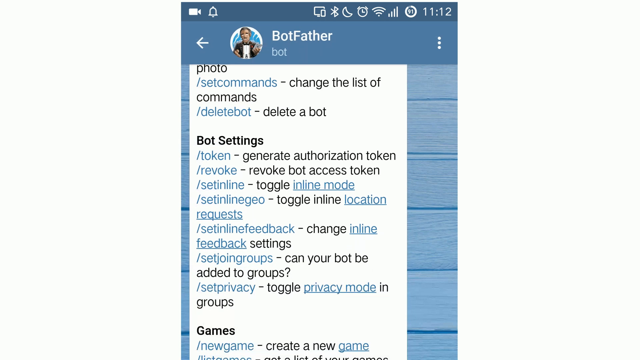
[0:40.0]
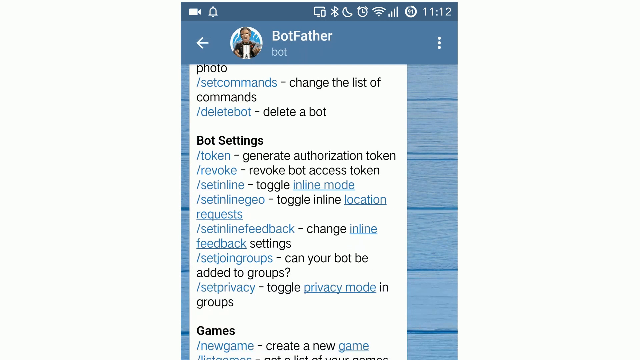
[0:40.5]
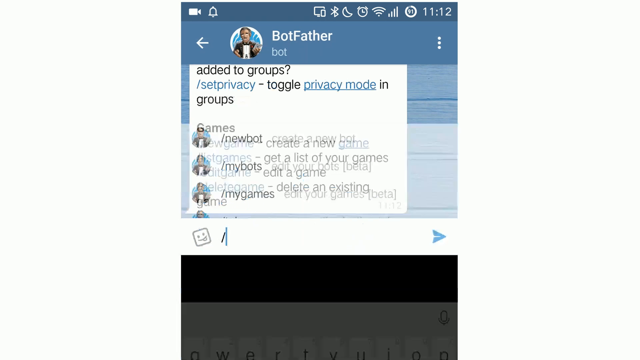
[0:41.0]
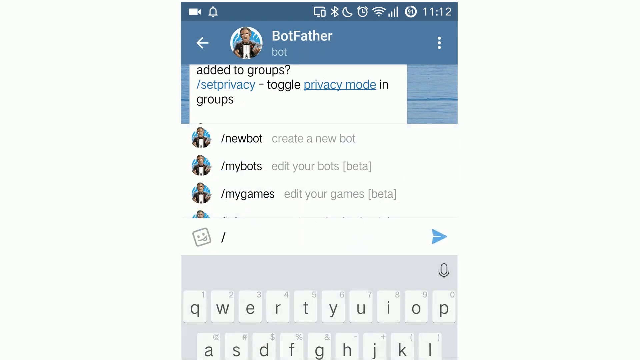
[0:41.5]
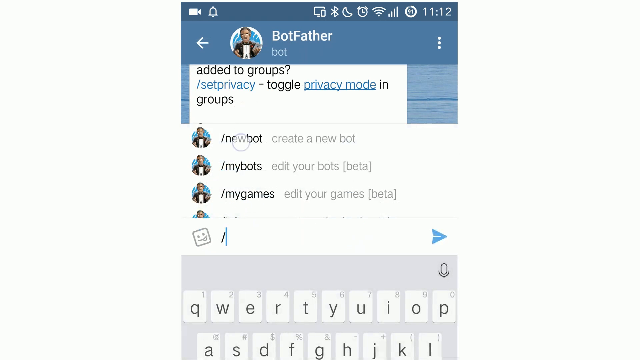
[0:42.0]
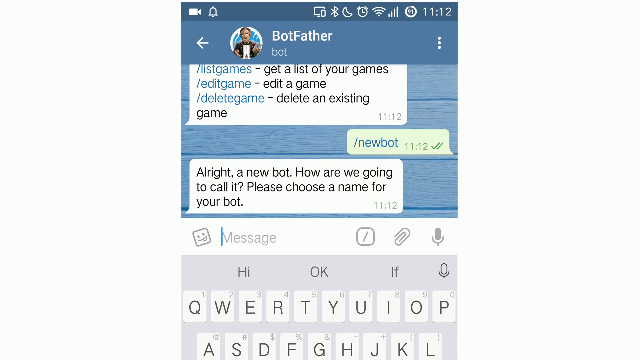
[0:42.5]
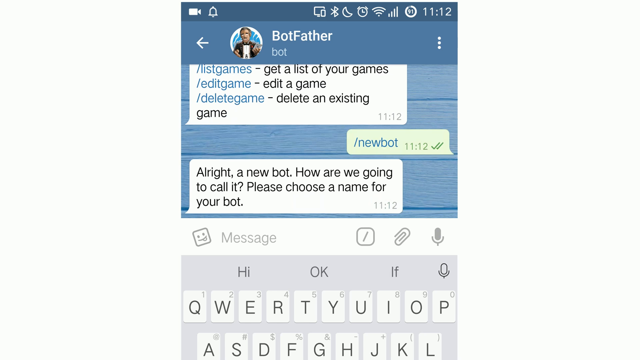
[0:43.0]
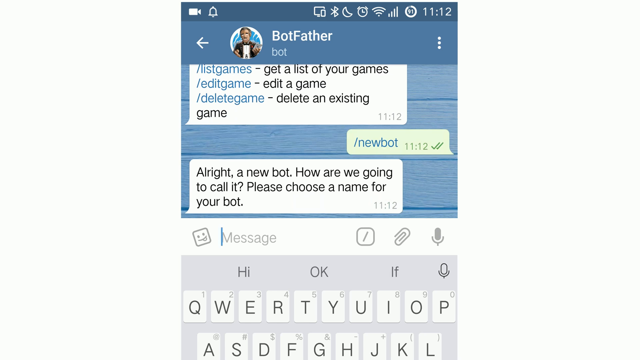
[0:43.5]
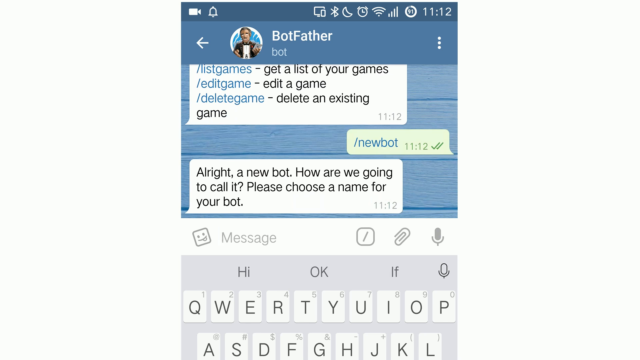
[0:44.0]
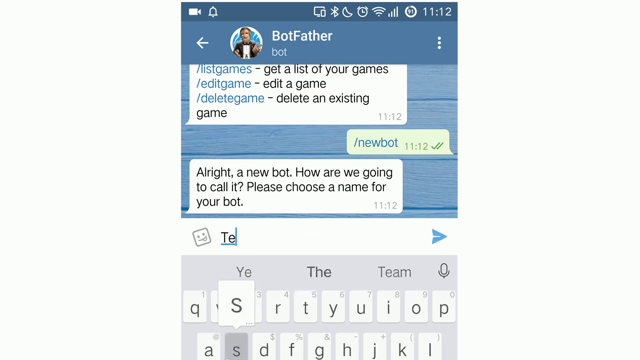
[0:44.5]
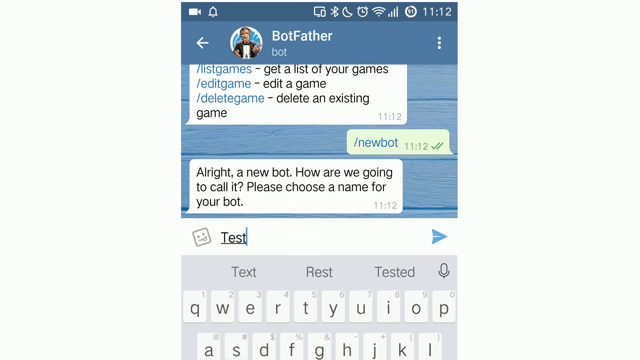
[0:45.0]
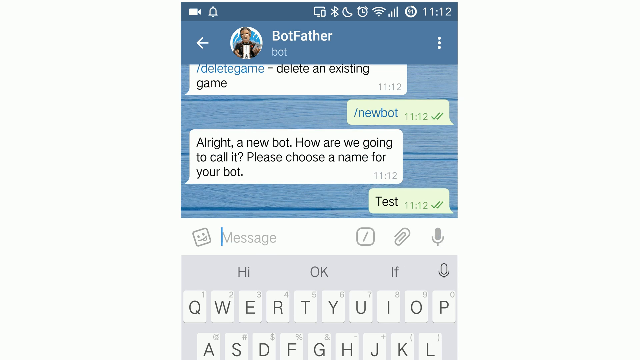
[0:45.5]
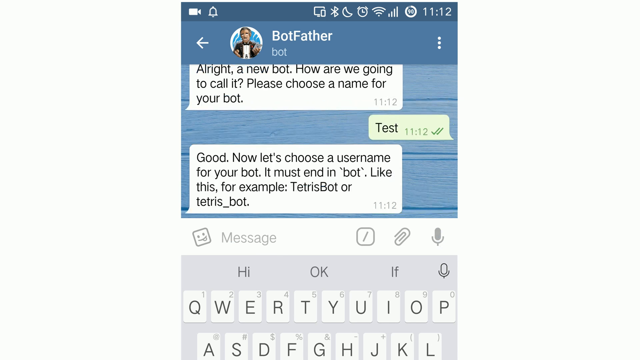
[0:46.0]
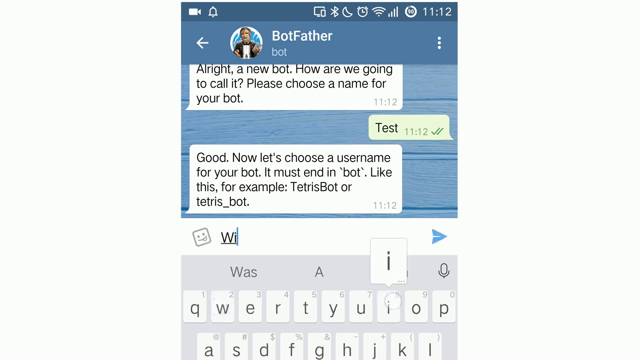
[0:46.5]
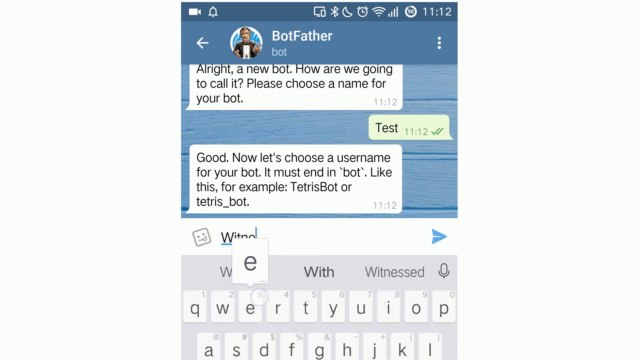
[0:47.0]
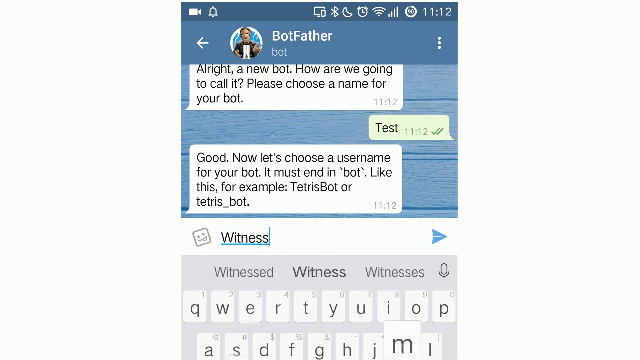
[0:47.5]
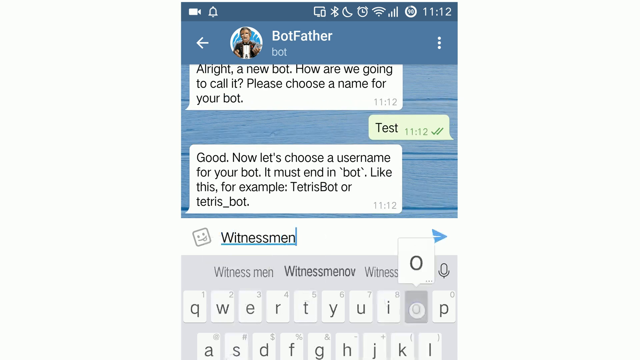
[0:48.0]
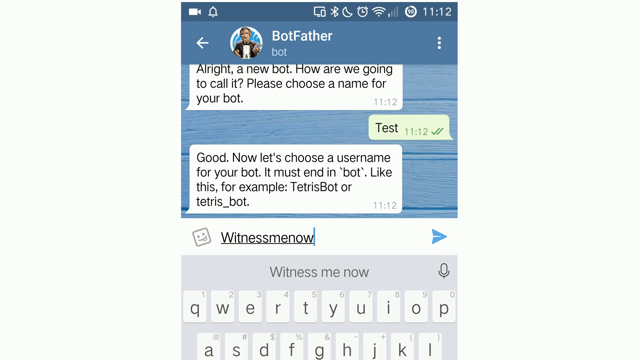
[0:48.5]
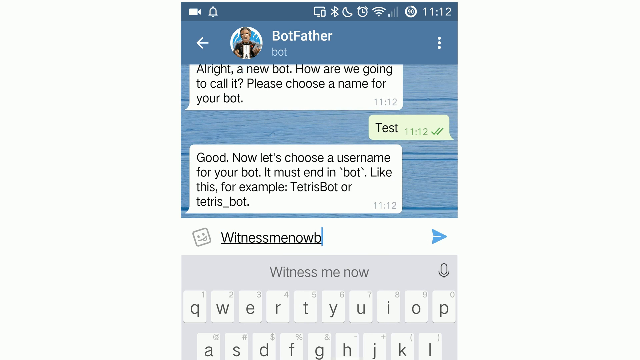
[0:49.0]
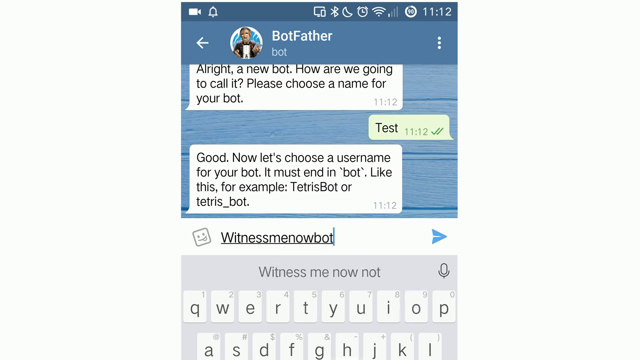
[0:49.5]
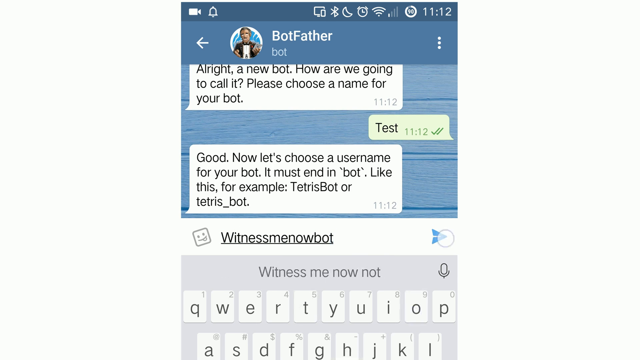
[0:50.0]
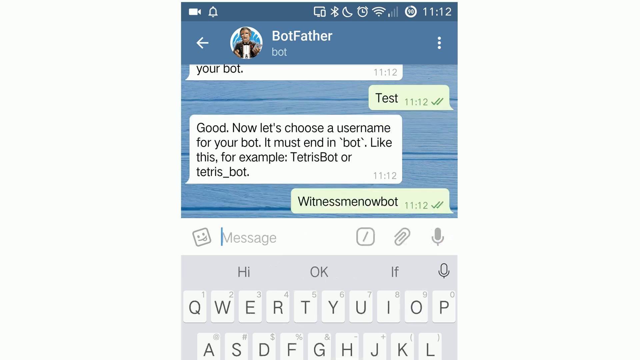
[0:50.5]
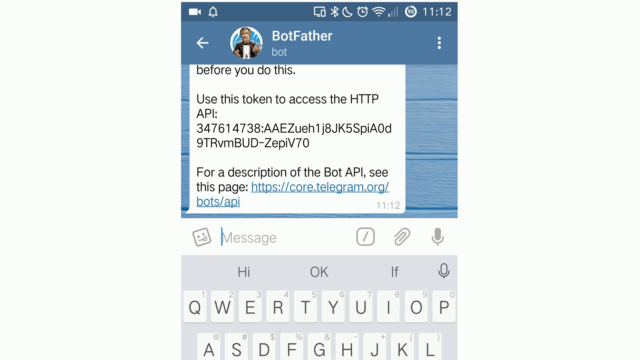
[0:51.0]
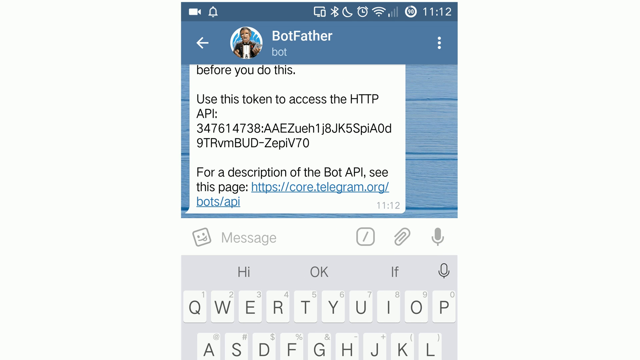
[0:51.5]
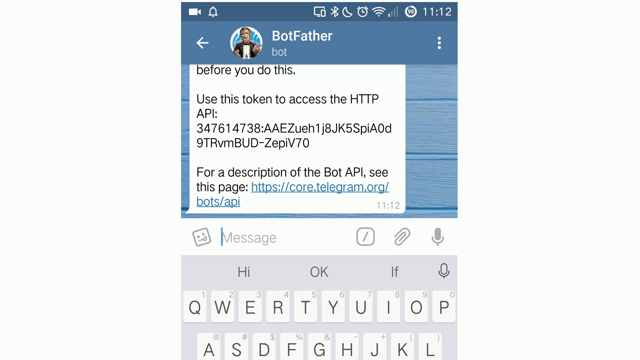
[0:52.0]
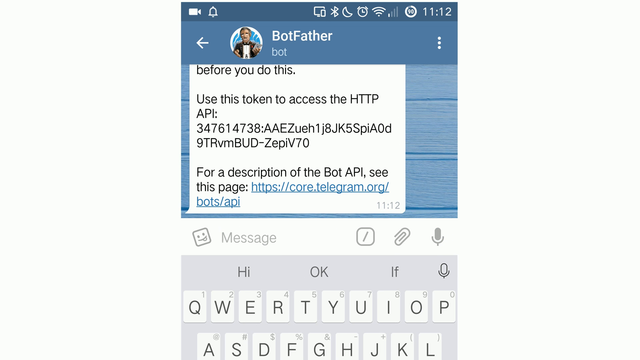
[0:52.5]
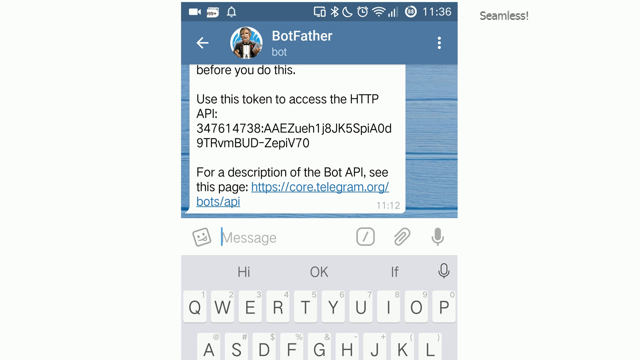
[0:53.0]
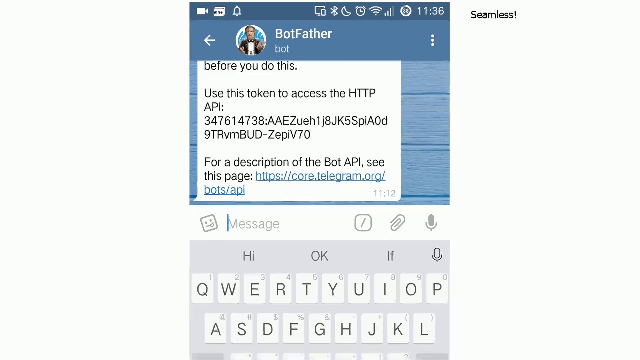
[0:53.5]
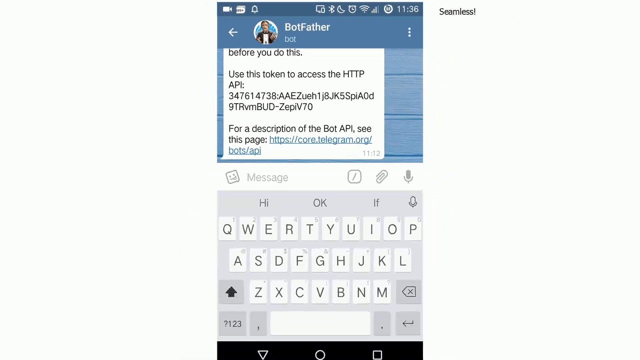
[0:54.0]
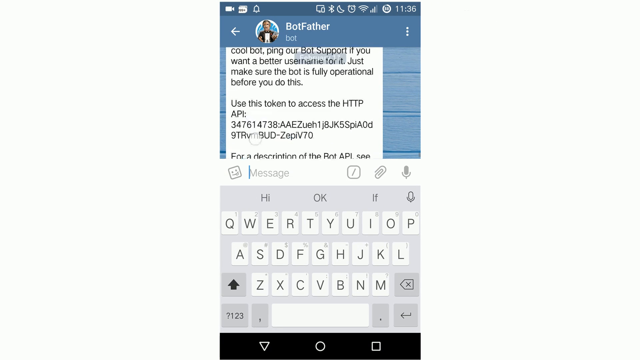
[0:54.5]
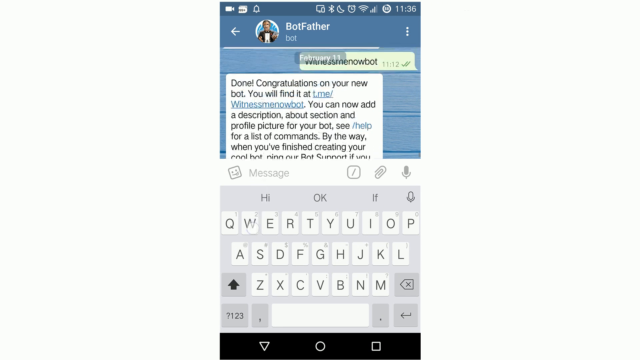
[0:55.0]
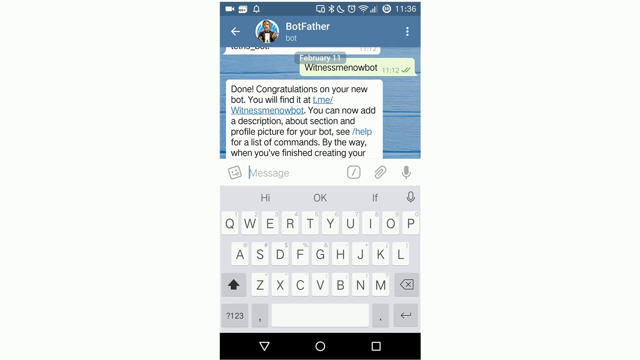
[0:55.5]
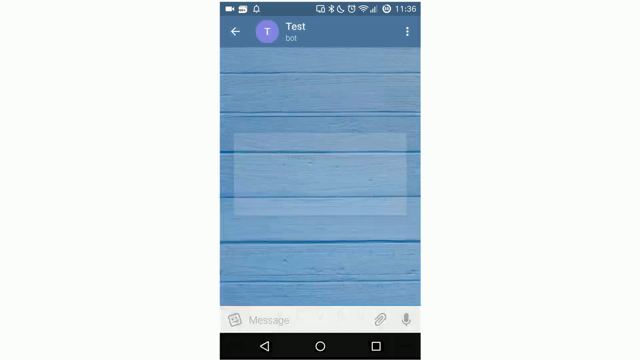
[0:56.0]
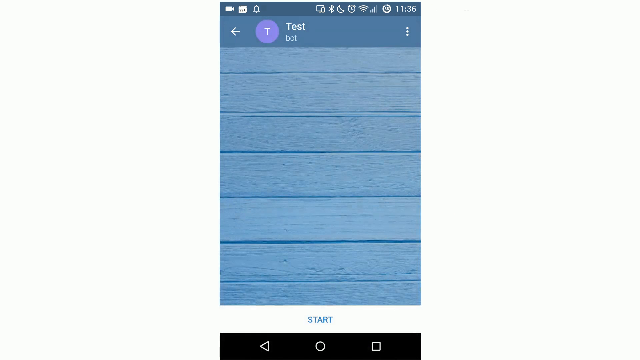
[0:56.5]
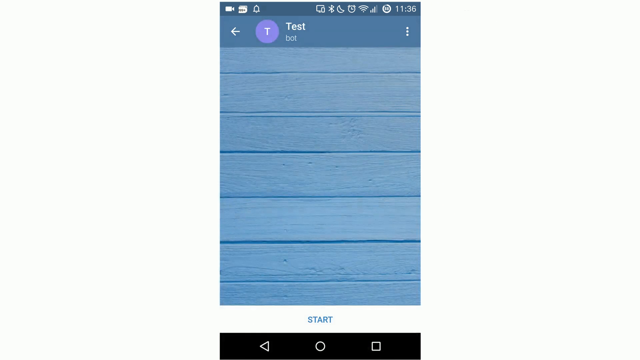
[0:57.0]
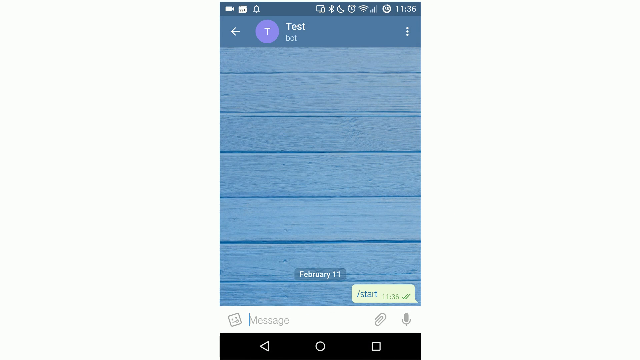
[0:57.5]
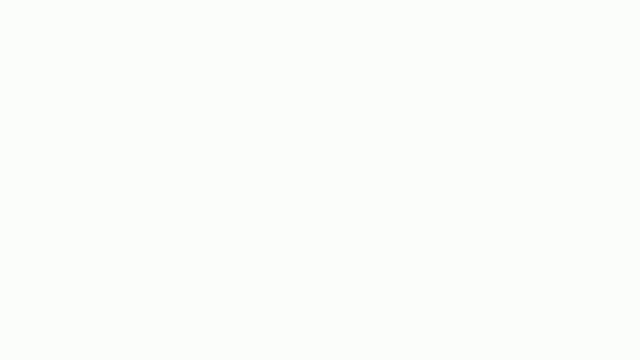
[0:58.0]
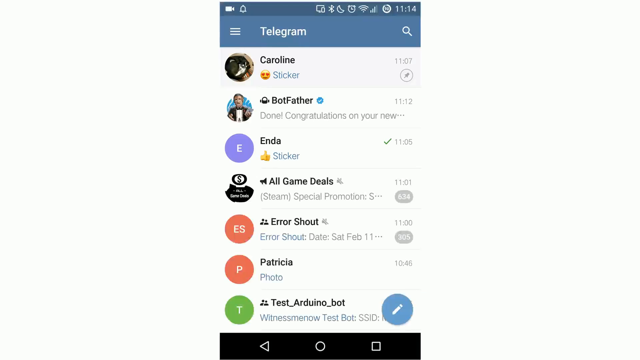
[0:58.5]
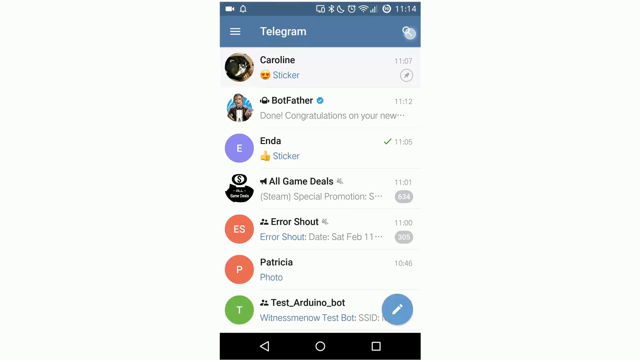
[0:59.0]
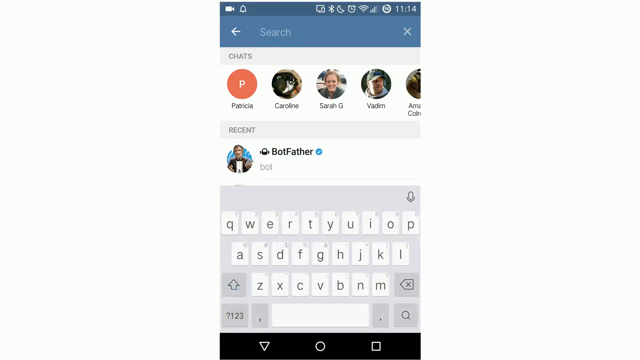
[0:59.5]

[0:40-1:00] On the phone, Telegram is open and Botfather has been typed in; the Botfather page shows what looks like all the text used to create the page, along with an option to add to groups. At the bottom, apparently, a message is typed: "test." The message "test" is sent and a reply comes back, saying "let's choose a username for your bot" and "it must end in bot like this, for example, Tetris bot or a Tetris_bot." He then types in "witness me now, bot." A reply says "use a token to access the HTTP API" and includes a link and a token. The user scrolls back up and clicks to go back to Telegram.